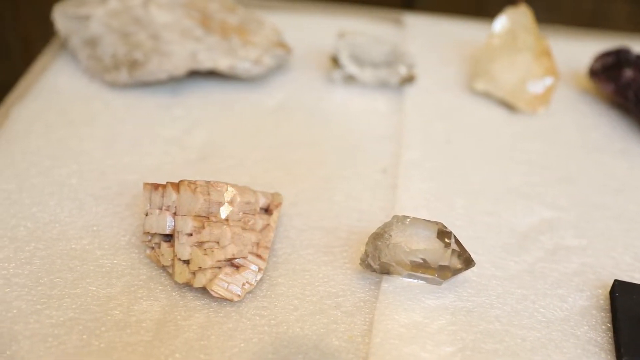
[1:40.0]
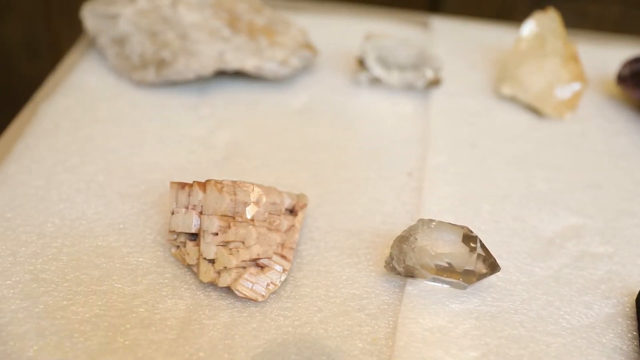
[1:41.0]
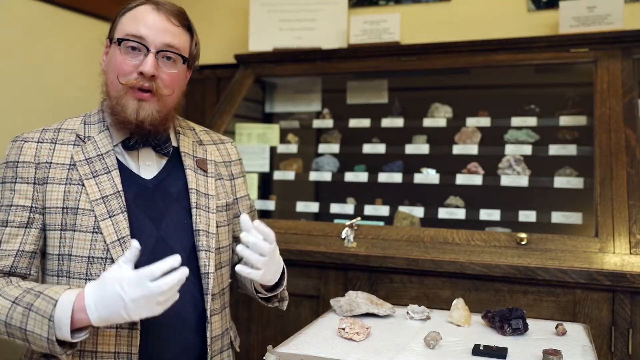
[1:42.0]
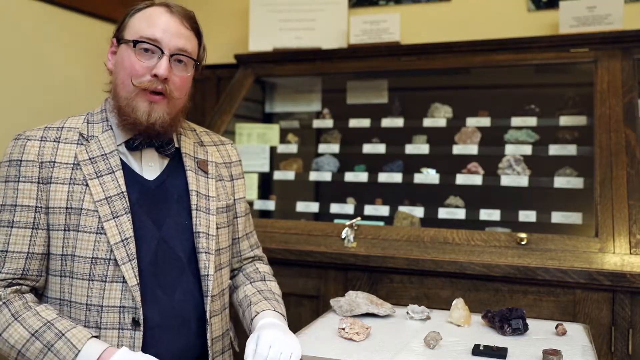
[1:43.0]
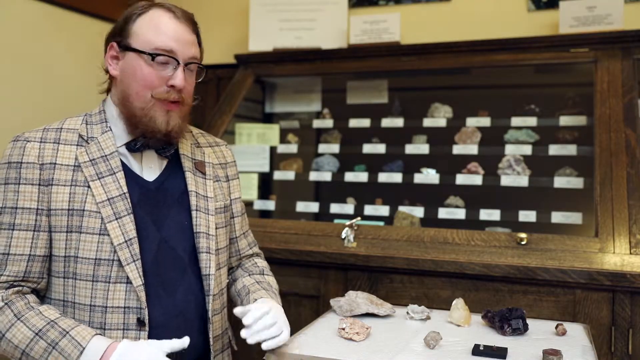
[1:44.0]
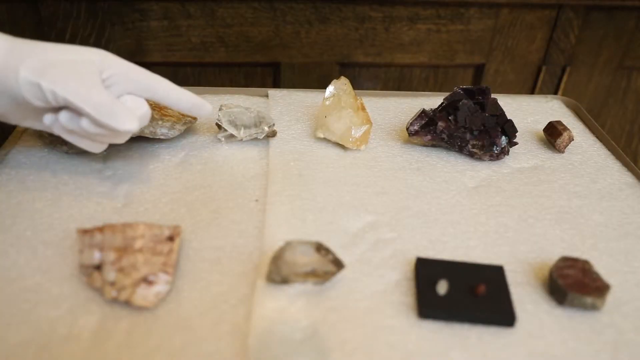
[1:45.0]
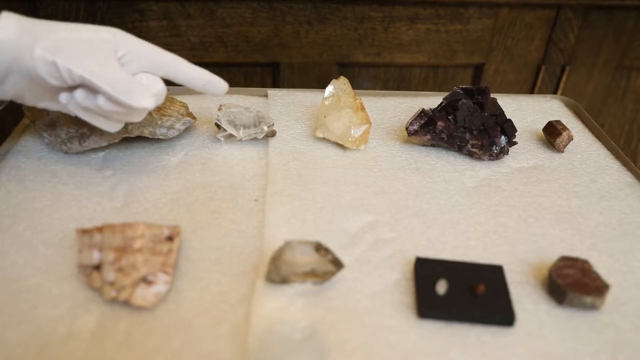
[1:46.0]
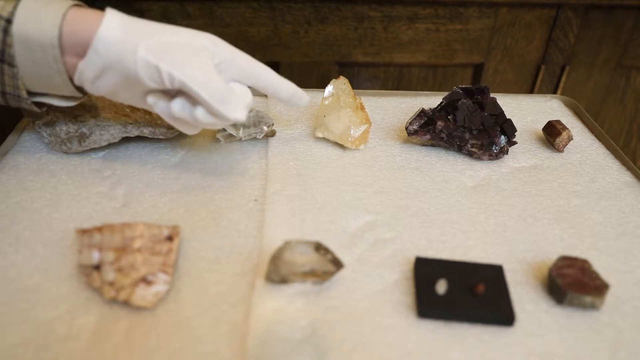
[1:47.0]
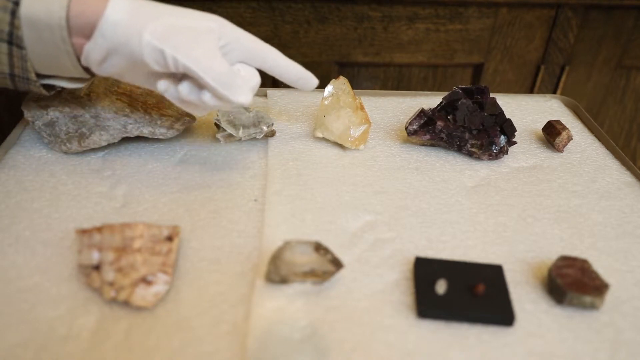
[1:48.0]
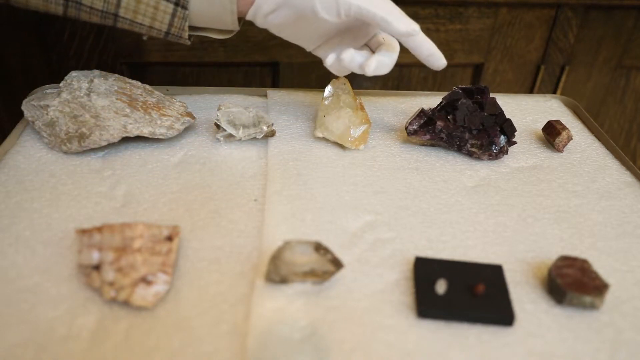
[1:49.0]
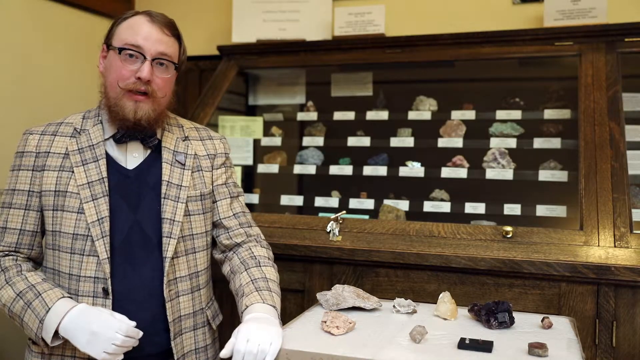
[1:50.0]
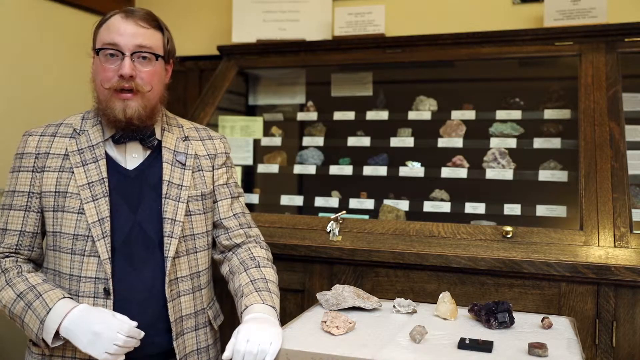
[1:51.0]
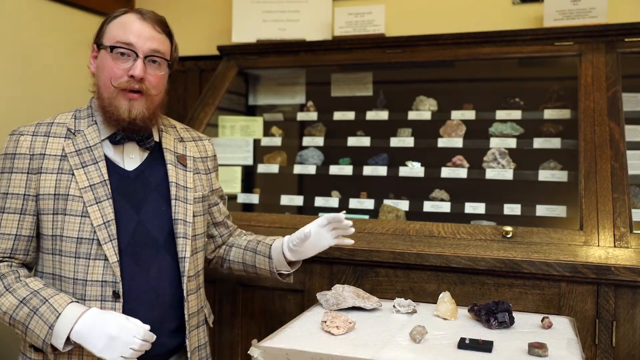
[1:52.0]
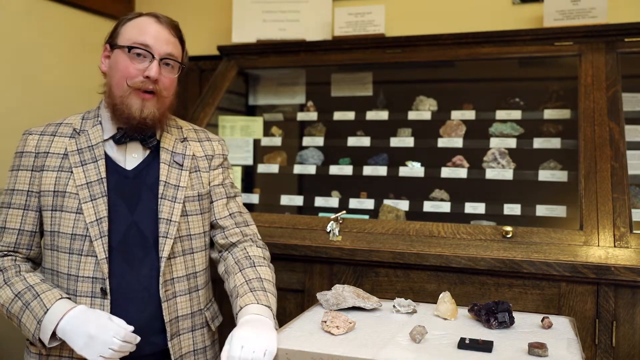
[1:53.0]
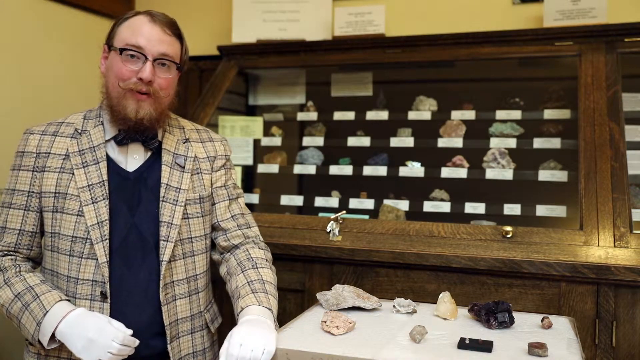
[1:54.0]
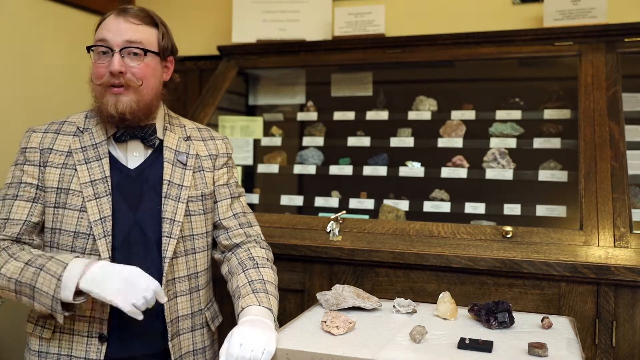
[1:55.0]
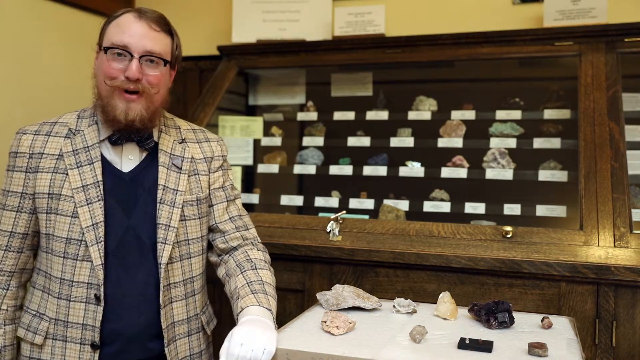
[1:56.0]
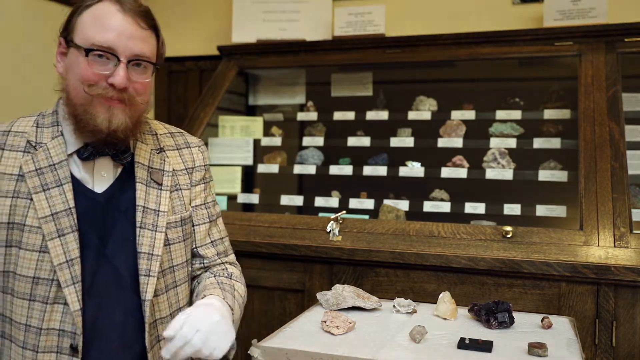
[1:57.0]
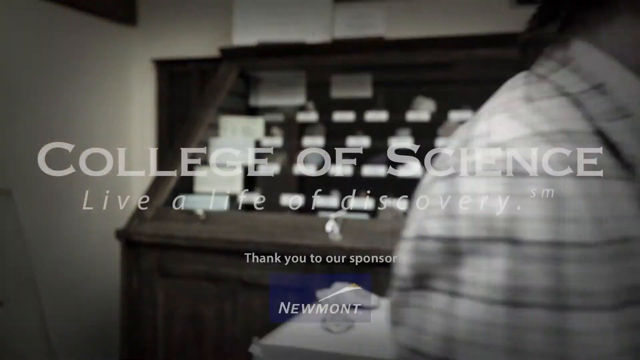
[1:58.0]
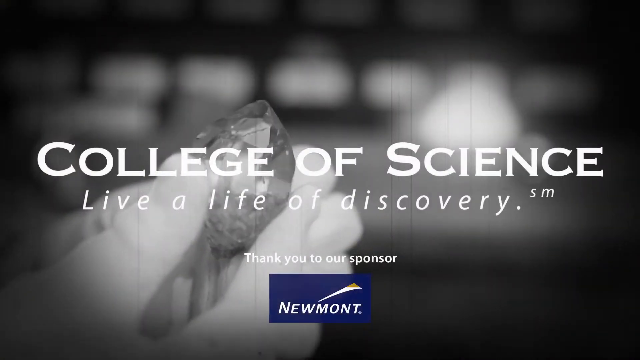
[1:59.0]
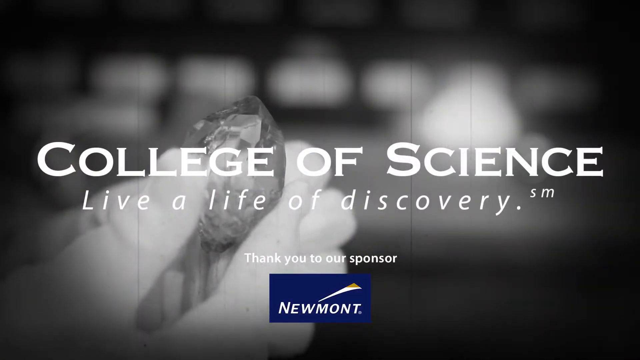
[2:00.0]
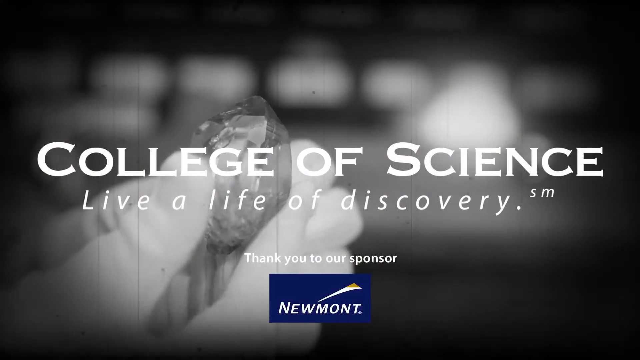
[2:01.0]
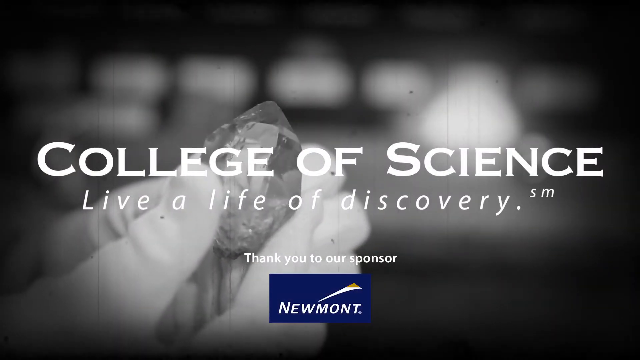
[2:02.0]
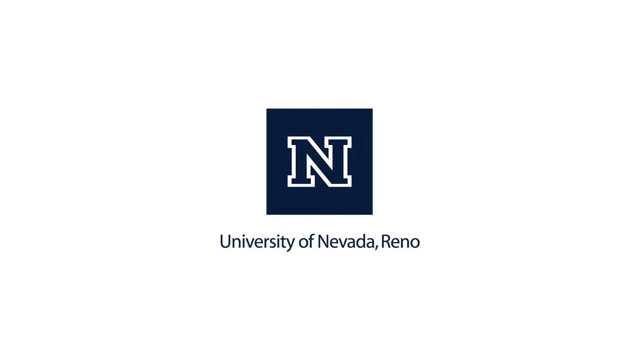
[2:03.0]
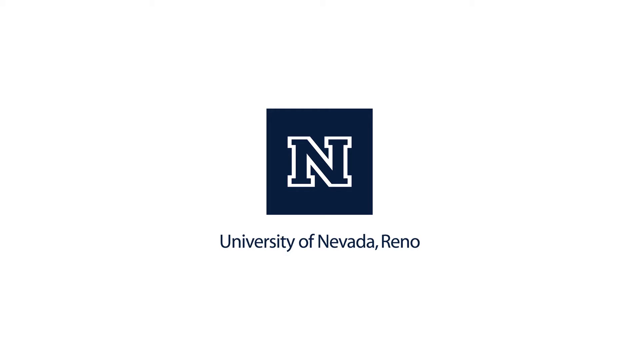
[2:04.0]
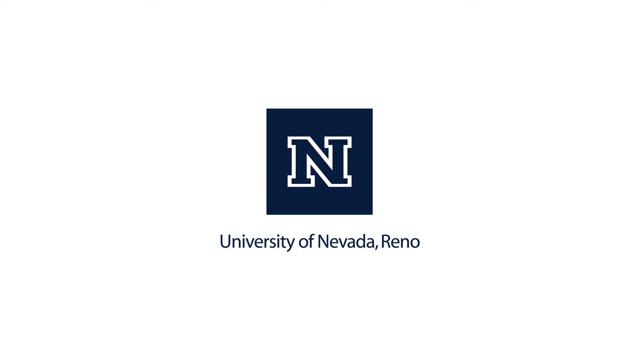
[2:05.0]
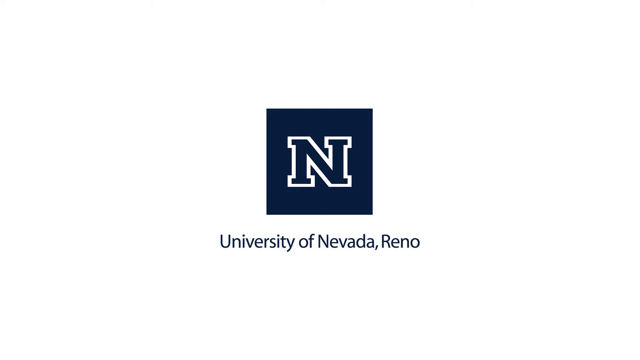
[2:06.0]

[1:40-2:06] The view returns to the samples on white tissue paper on the trolley. The top row of four has an irregular big white and brown rock on the left, then a very clear small crystal, a more yellowish but clear crystal, and a reddish lump on the right. The second row starts with a white rock that looks like it is made of smaller cubes jammed together, with a clear crystal to its right. The scene shifts rapidly to Garrett Barmore on the left of the frame, waving his arms and talking, then back to the trolley, where his white-gloved left hand points at the rock in the middle of the top row. He is then shown talking to the camera and gesticulating with his arms. The scene fades out and into a black-and-white credit screen with a gloved hand holding a clear crystal rock in the background. In the middle of the frame, in white capital letters, is "College of Science", beneath it in lowercase "Live a life of discovery" with a superscript SM, and below that, in small white letters, "Thank you to our sponsor". Below that is a blue rectangle containing "Newmont" in white capital letters, with a stylised white tick or swoosh just above those letters. The hand holds the rock for a while, swaying a bit. The scene then shifts to a logo, a slate blue square with a capital N outlined in white in the middle, and beneath it the caption "University of Nevada, Reno".